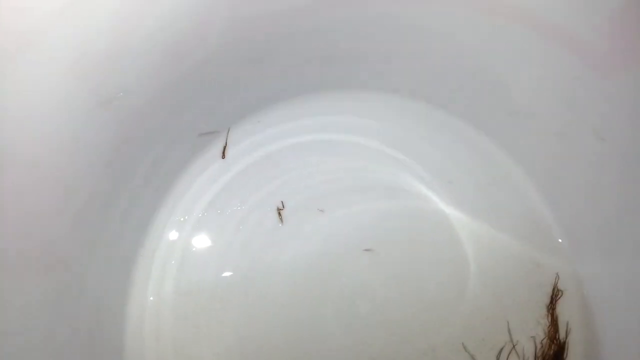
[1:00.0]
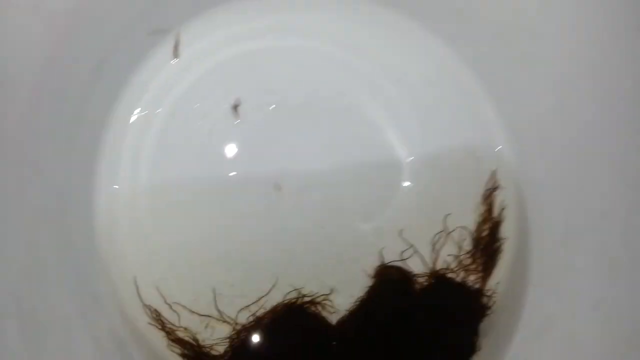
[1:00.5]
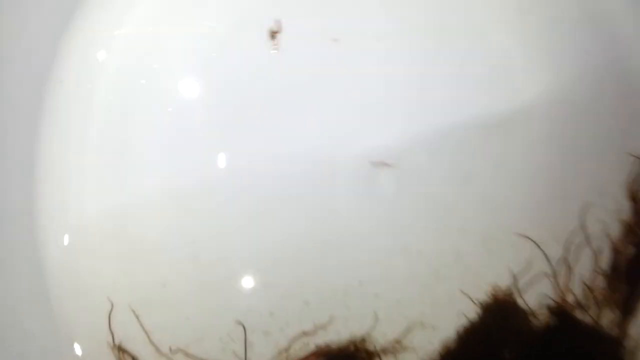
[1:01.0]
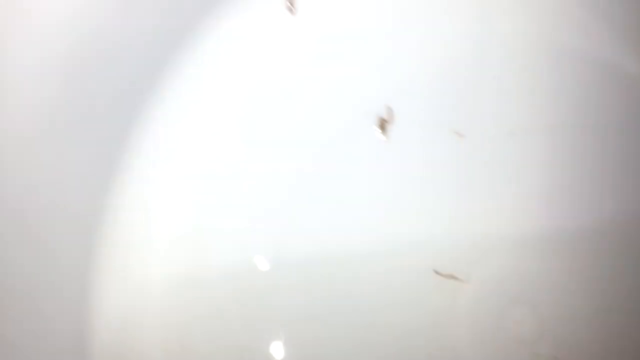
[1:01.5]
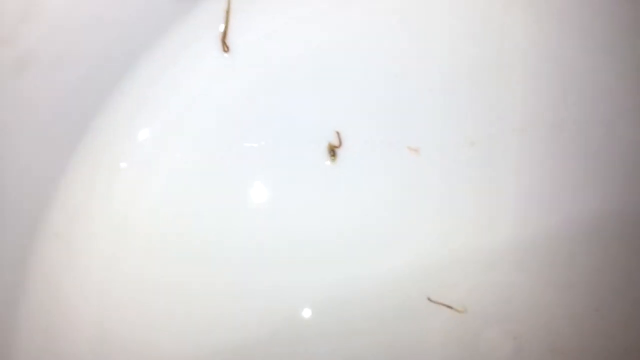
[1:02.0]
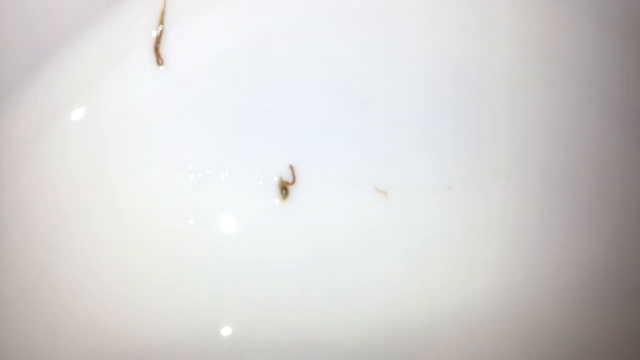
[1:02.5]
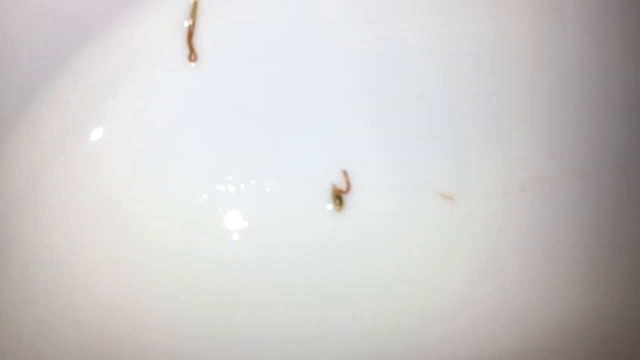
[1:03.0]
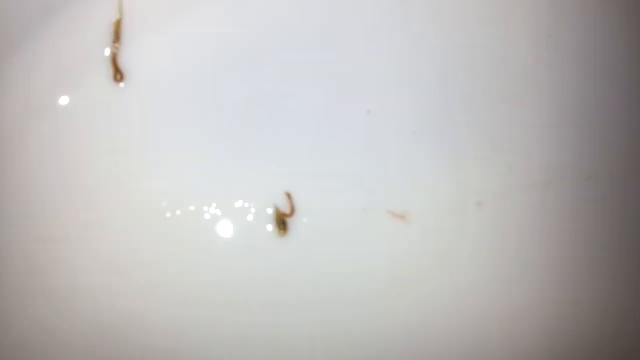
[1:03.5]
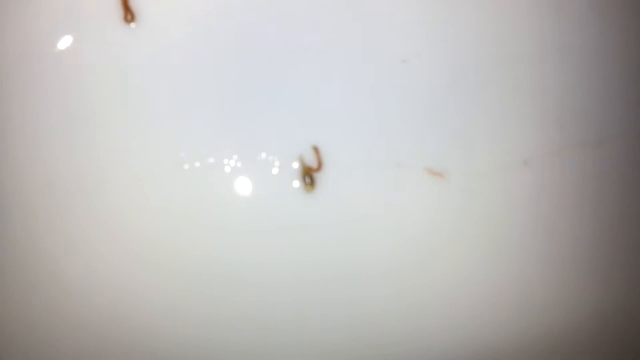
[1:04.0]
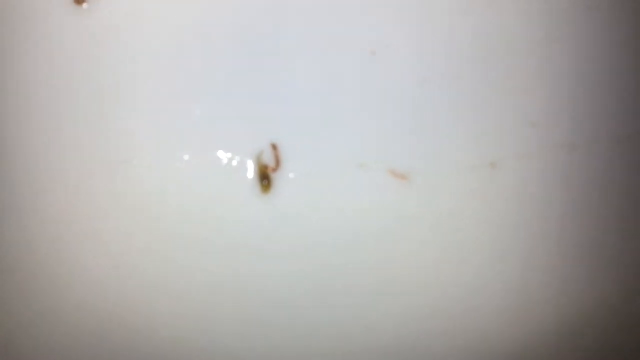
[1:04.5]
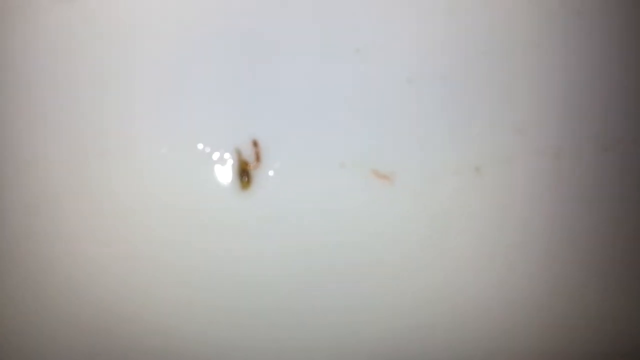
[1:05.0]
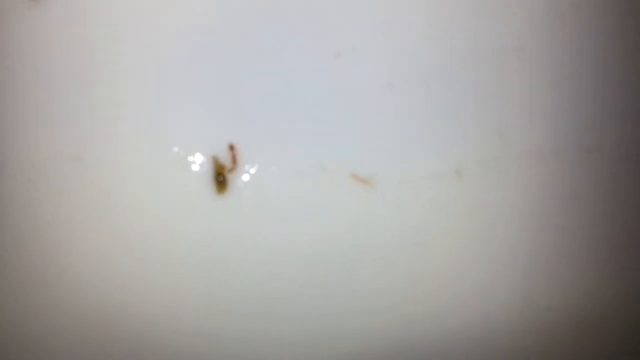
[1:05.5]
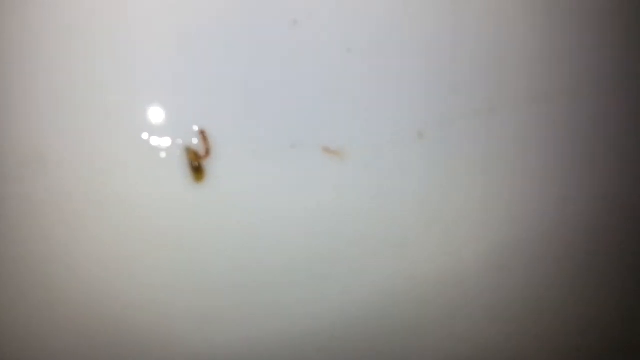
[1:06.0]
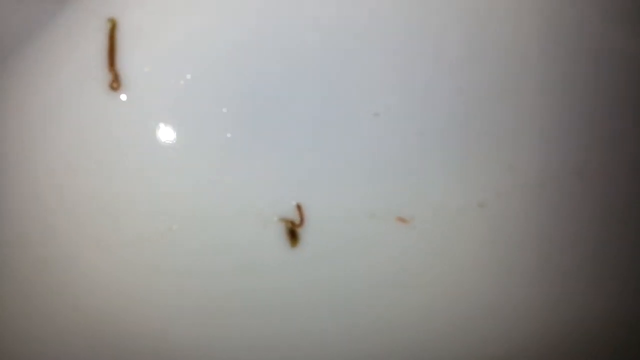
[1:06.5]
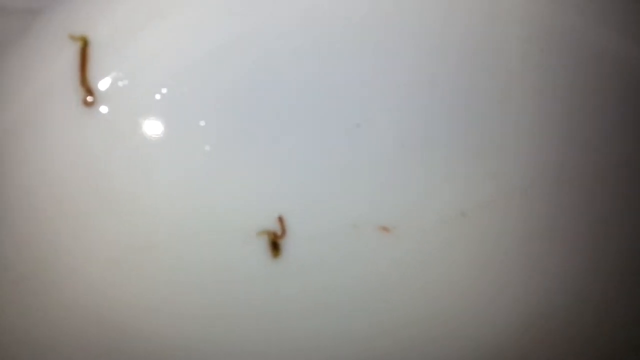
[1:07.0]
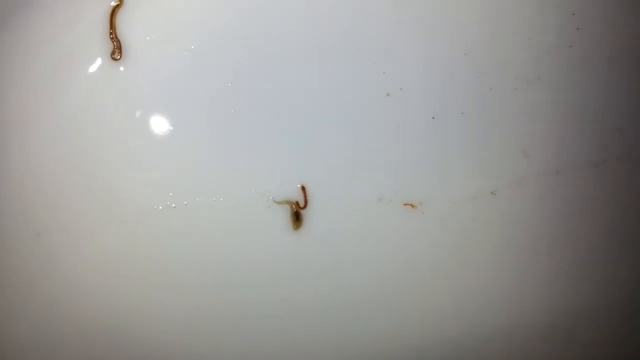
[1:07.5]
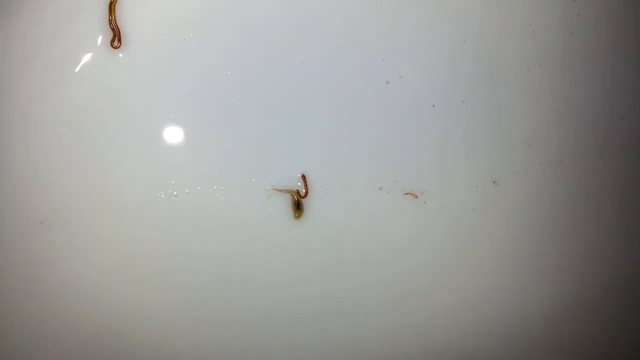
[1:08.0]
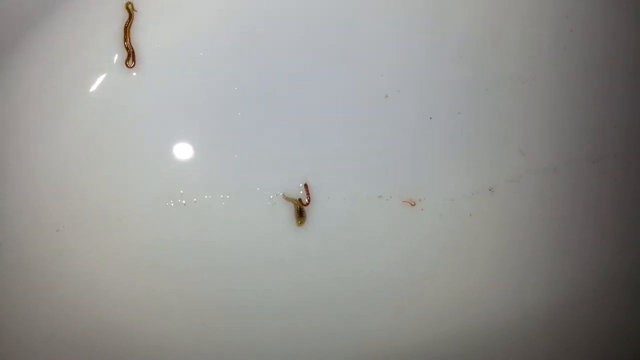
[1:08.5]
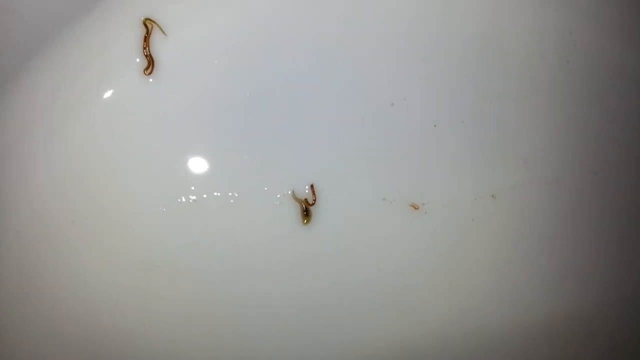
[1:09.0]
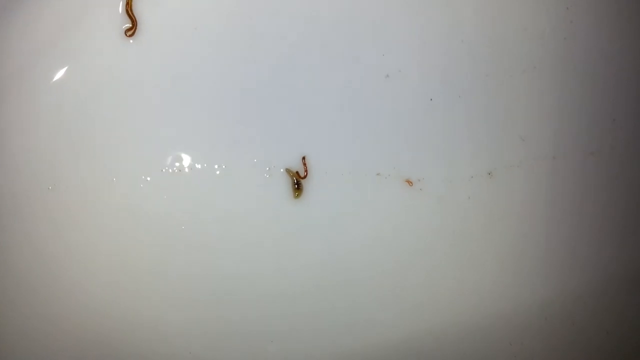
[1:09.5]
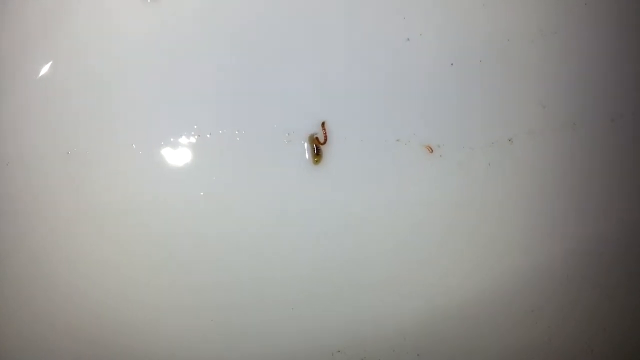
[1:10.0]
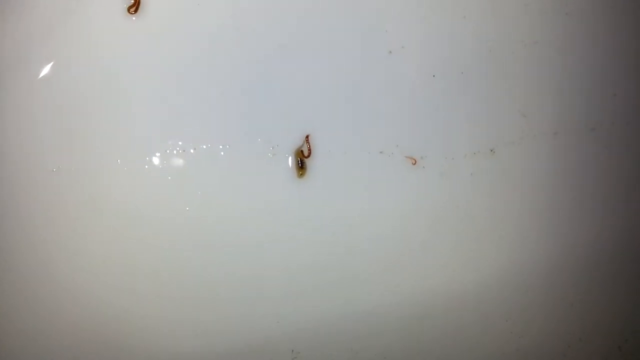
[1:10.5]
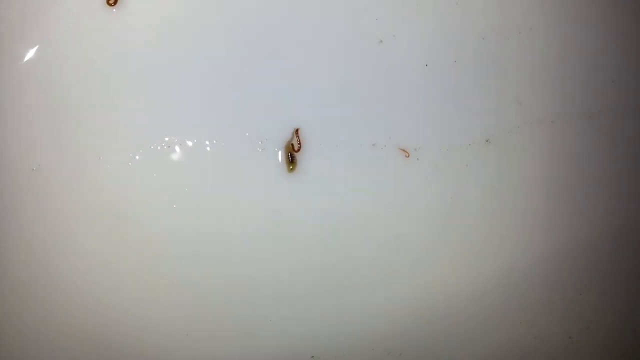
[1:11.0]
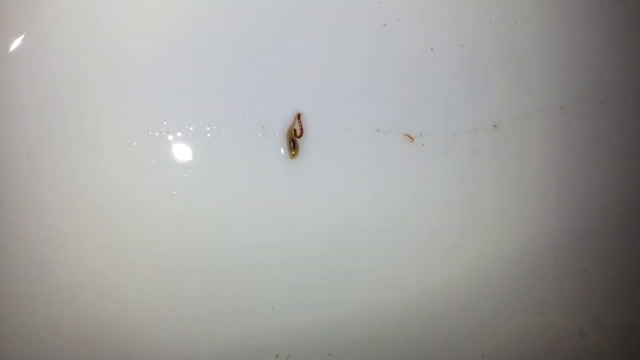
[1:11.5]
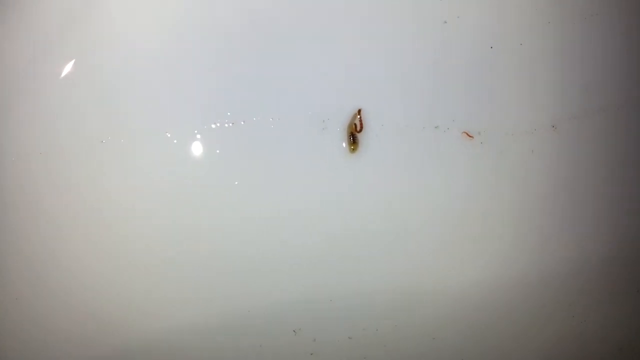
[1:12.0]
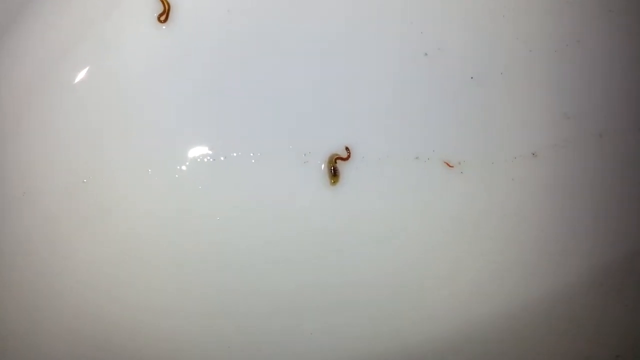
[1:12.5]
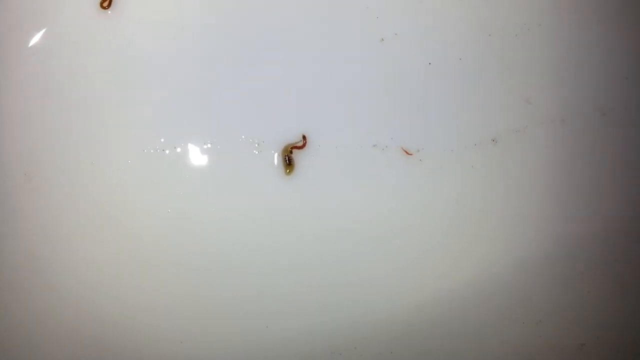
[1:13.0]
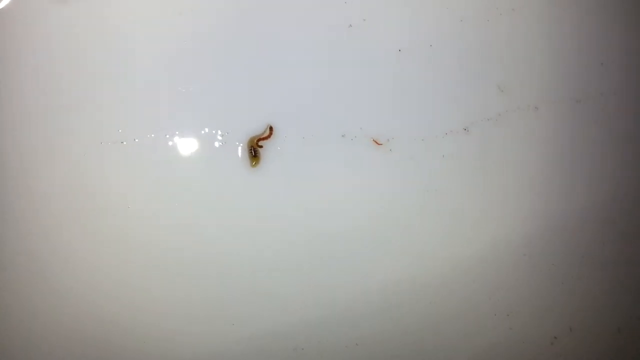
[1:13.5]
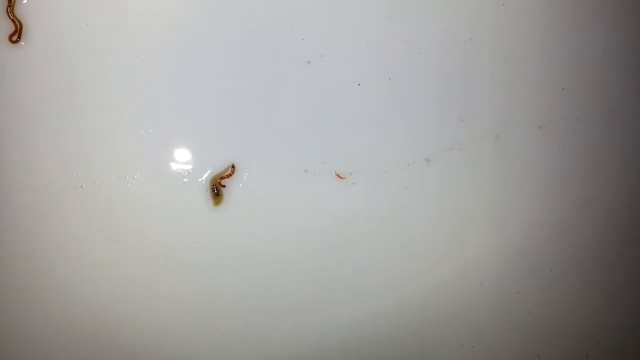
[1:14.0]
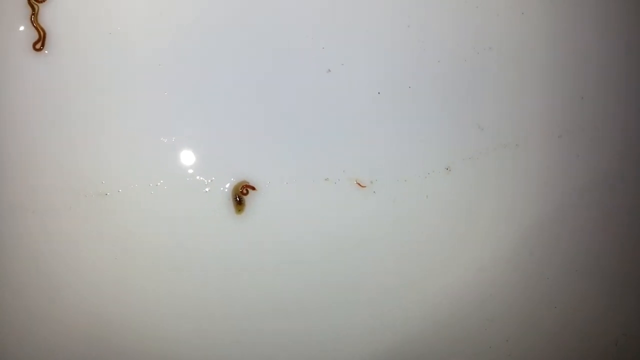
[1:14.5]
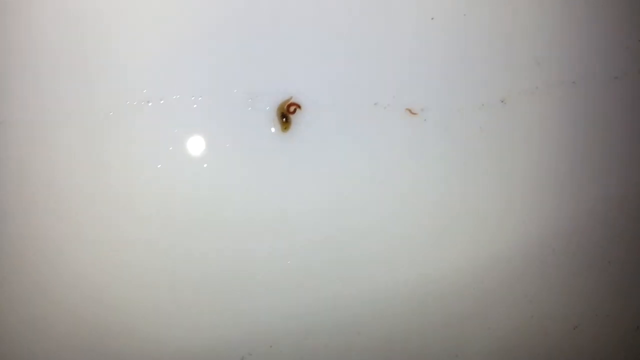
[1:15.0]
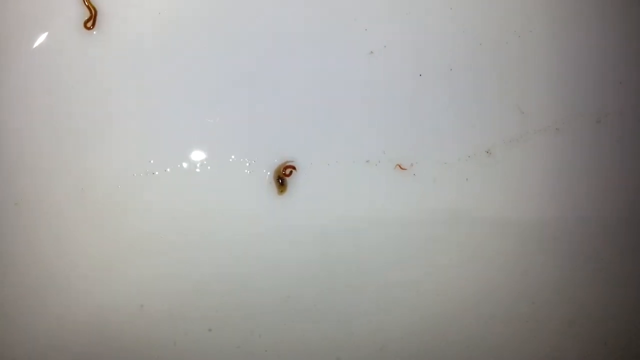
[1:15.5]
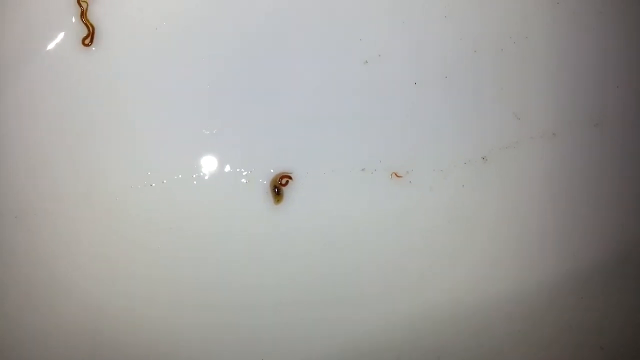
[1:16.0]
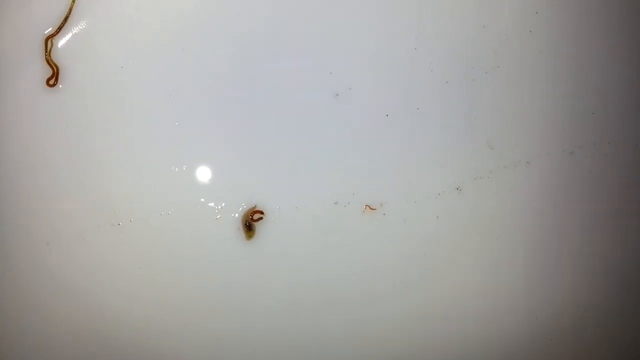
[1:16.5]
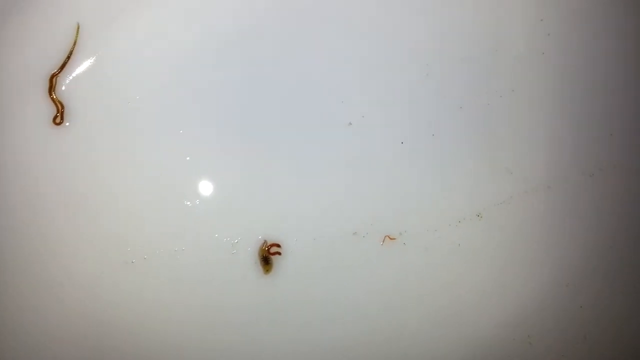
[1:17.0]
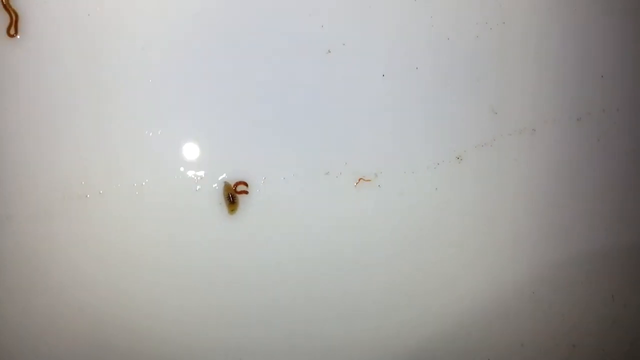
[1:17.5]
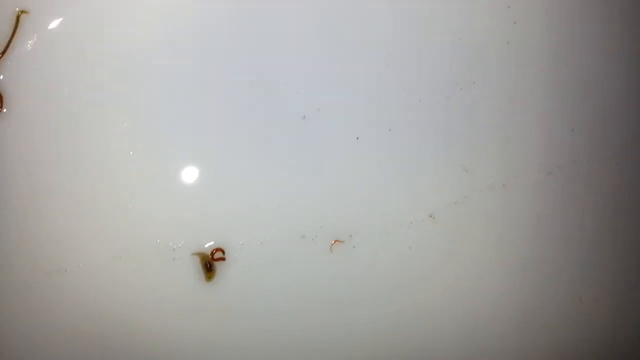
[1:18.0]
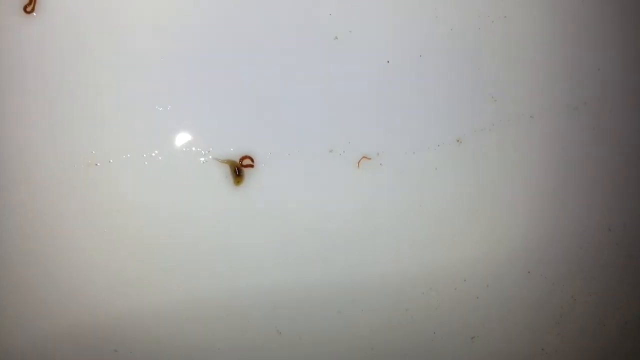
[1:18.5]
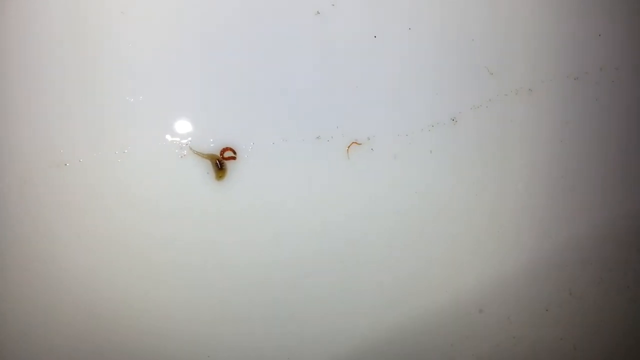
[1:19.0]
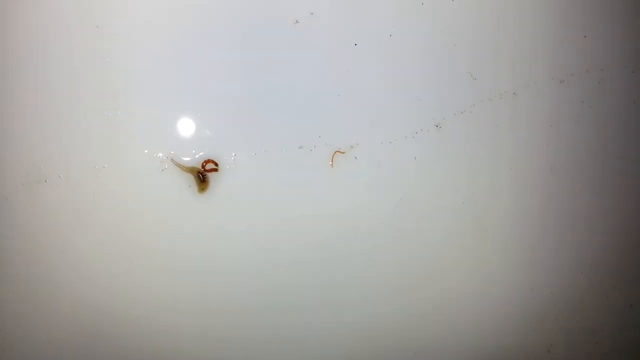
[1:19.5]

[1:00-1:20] The camera zooms closer to the residues, which are worm-like animals. The one on the upper part is quite long and wobbles around; it appears to be two, but it is one single long worm that has folded its body. The worms are thin and slimy, and the water helps them move since the base of the cup is wet. The camera also zooms in on the middle one, slightly above the water level, where there are two worms wobbling around. The slightly thicker one is quite large and seems to be engulfing the smaller one, but it lets go and wobbles around.